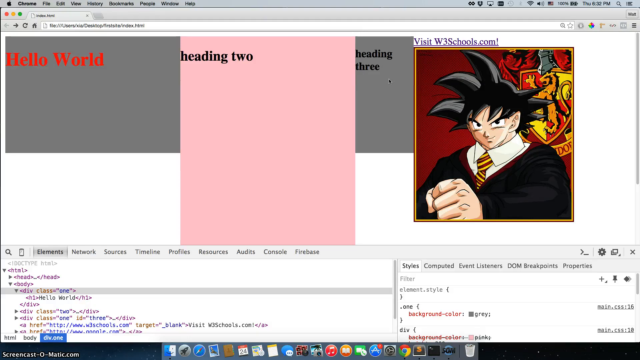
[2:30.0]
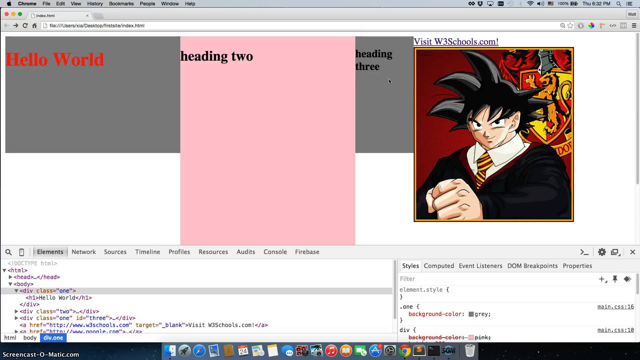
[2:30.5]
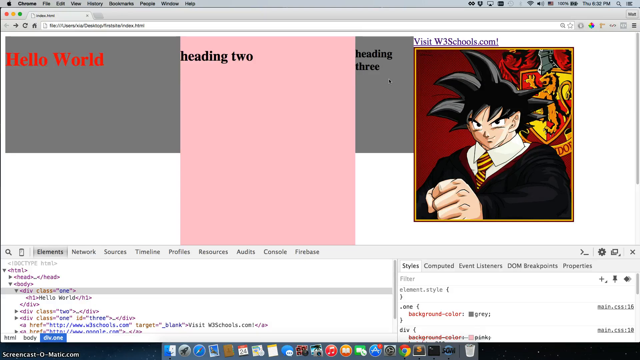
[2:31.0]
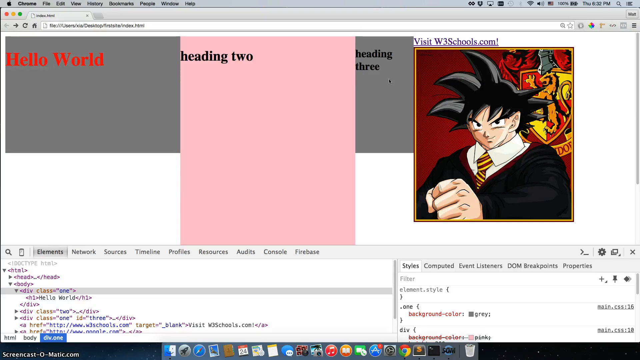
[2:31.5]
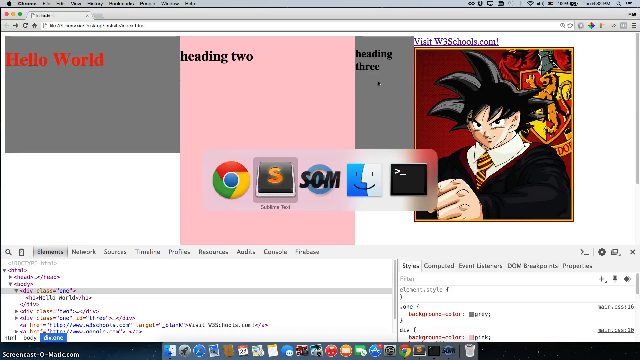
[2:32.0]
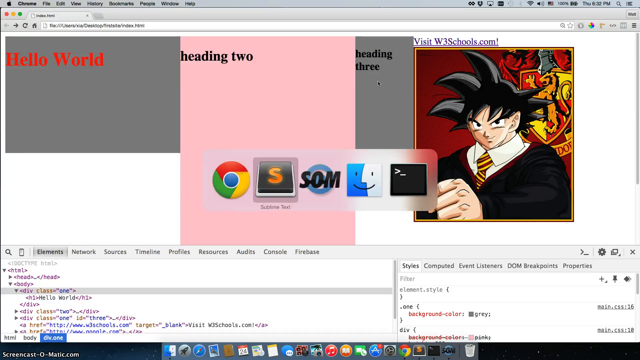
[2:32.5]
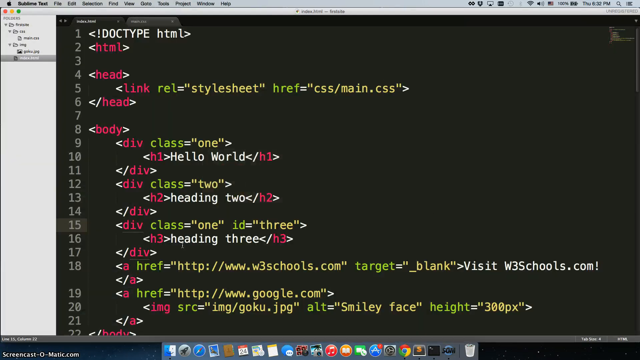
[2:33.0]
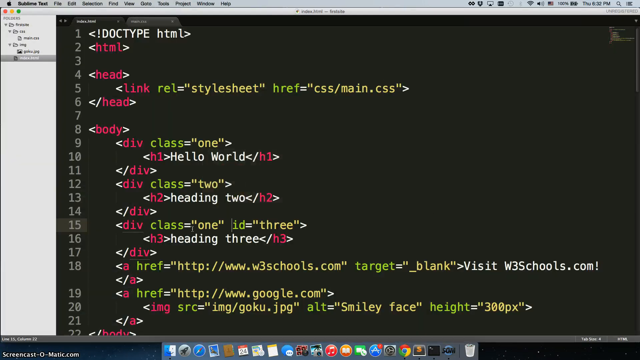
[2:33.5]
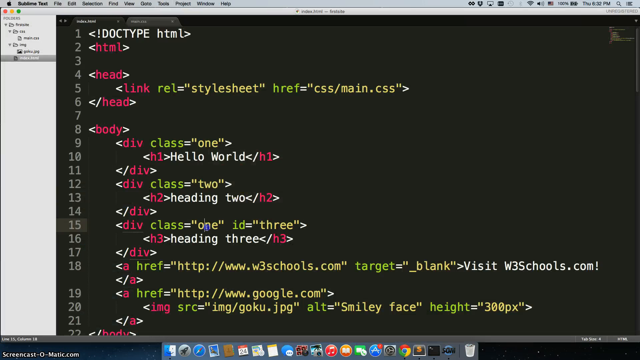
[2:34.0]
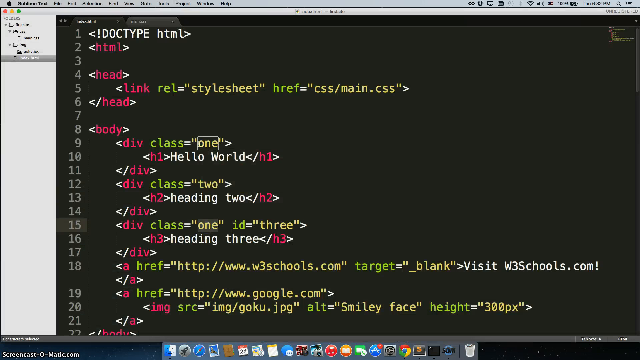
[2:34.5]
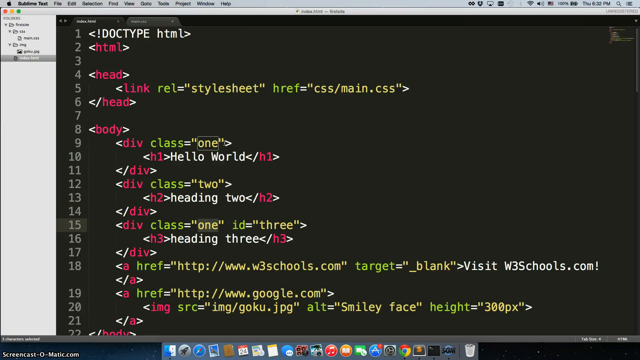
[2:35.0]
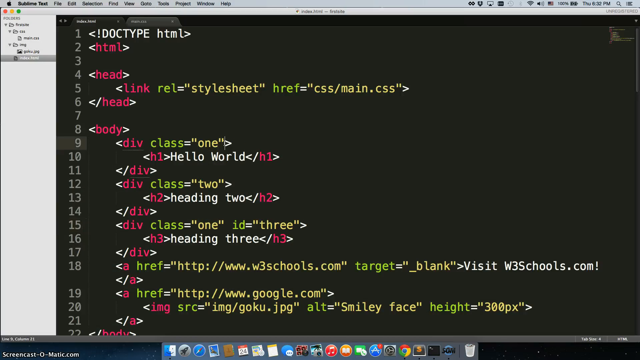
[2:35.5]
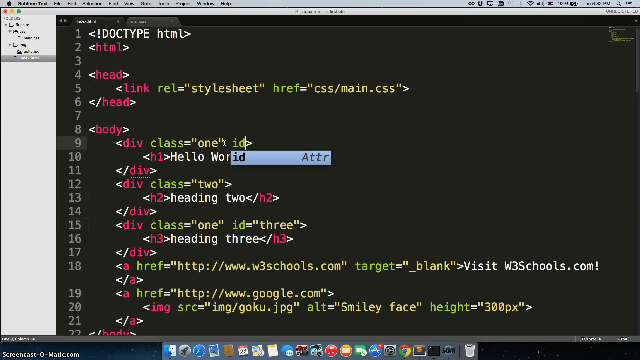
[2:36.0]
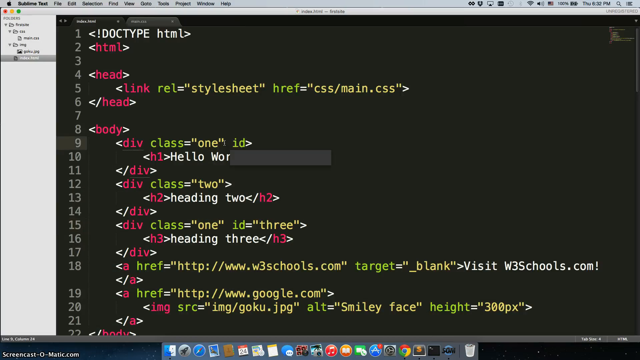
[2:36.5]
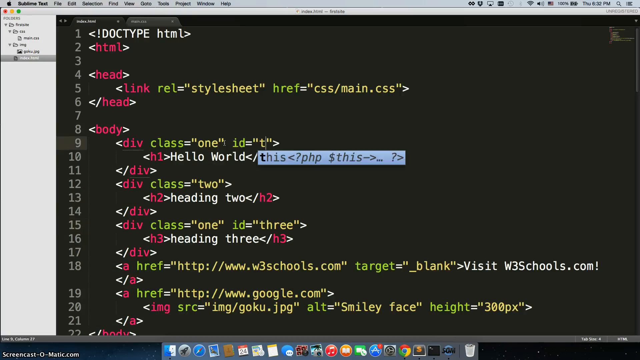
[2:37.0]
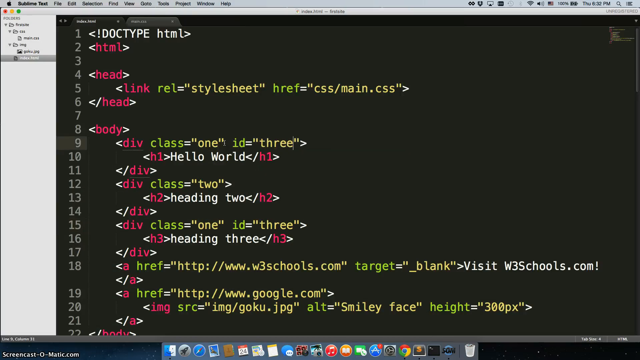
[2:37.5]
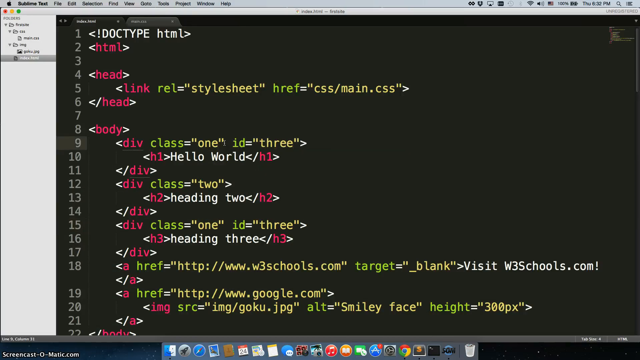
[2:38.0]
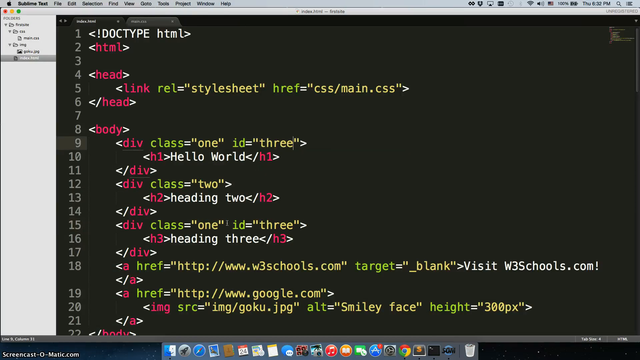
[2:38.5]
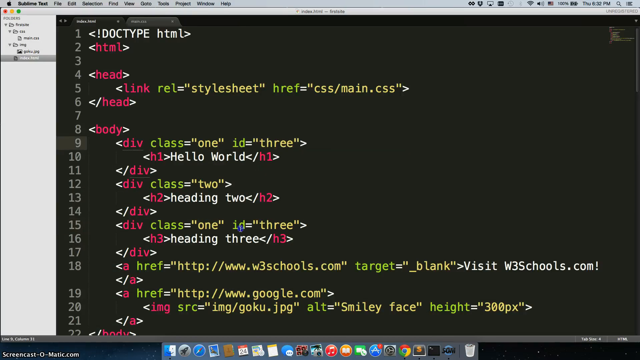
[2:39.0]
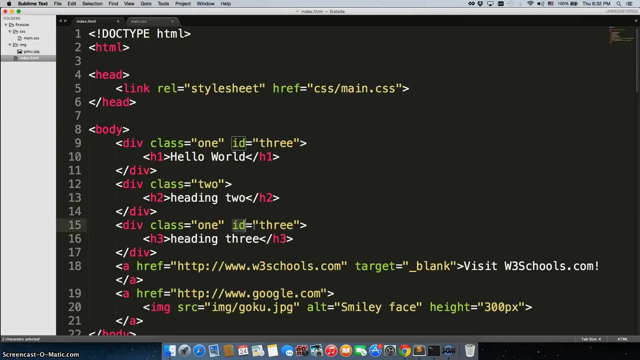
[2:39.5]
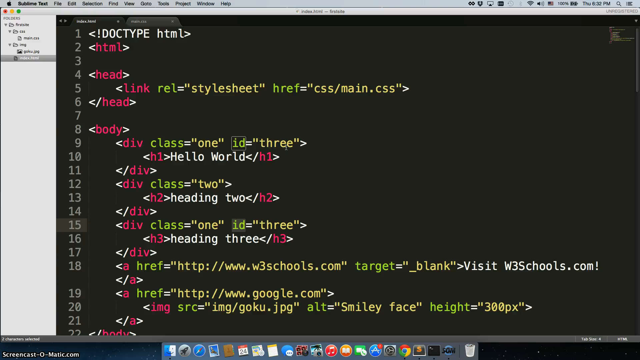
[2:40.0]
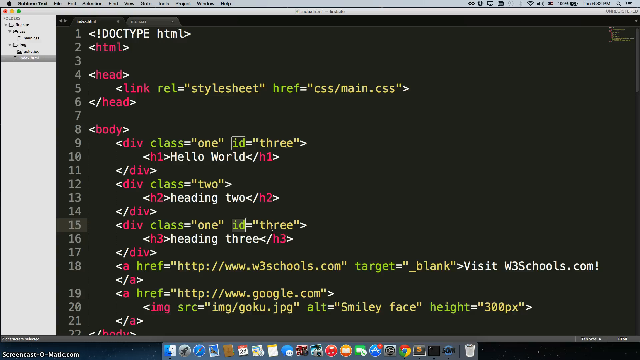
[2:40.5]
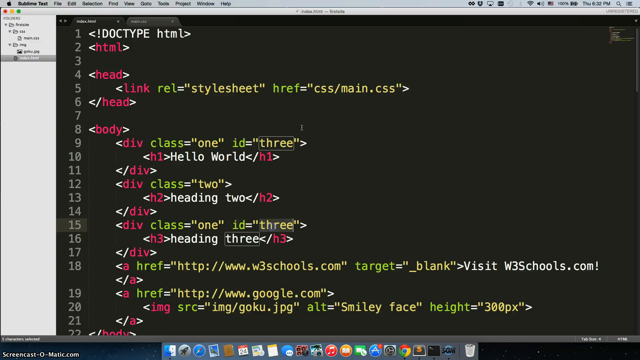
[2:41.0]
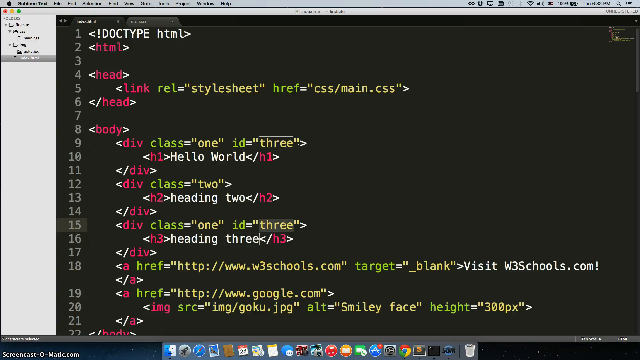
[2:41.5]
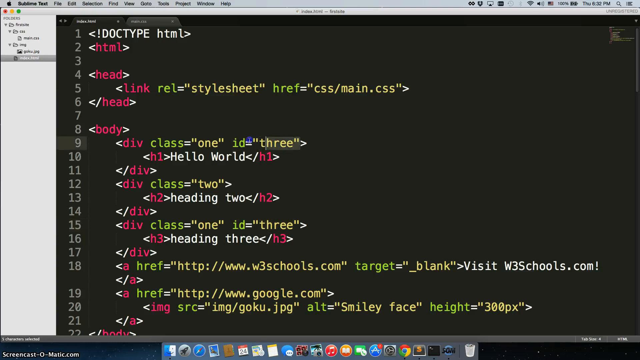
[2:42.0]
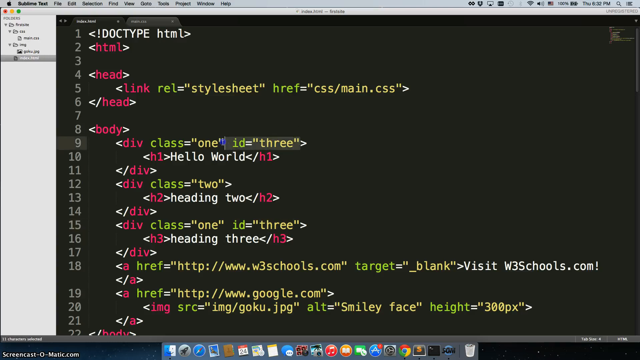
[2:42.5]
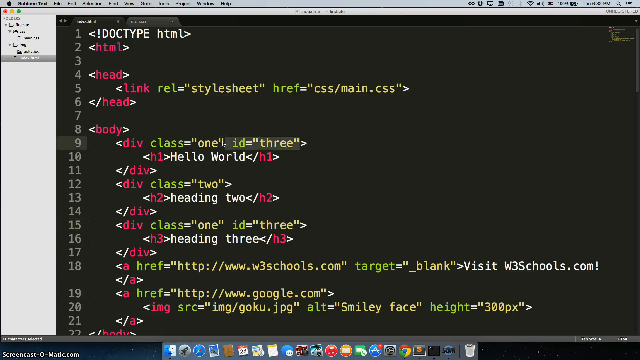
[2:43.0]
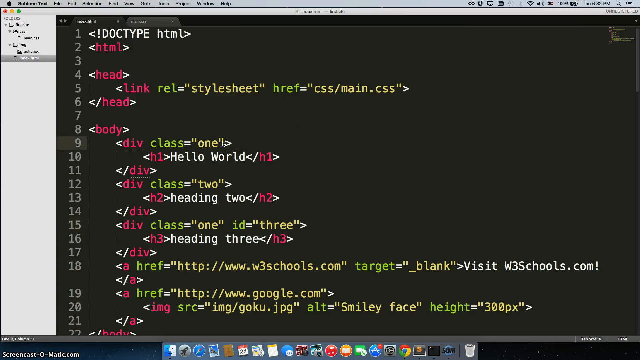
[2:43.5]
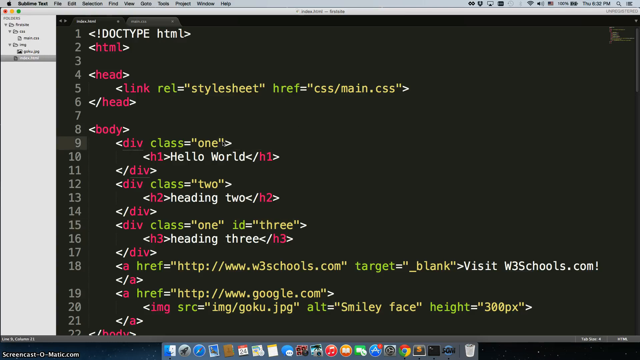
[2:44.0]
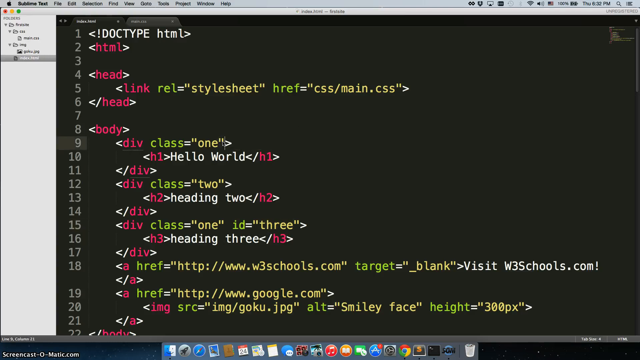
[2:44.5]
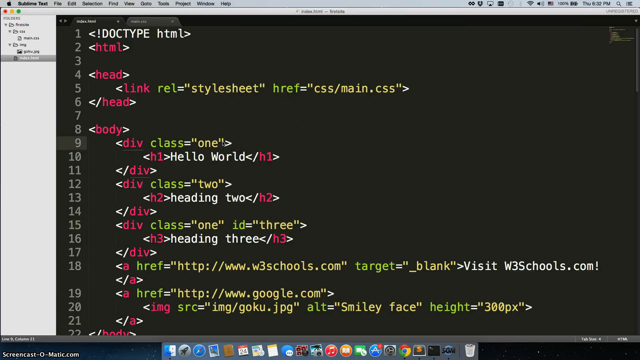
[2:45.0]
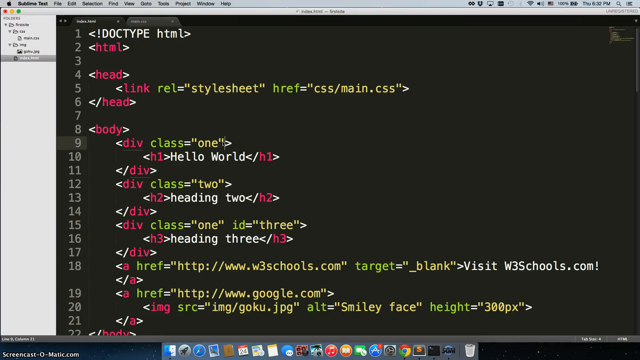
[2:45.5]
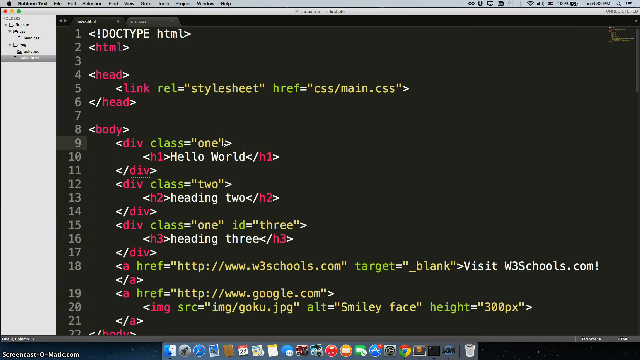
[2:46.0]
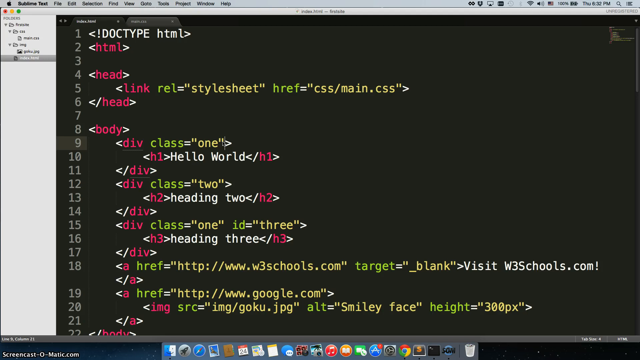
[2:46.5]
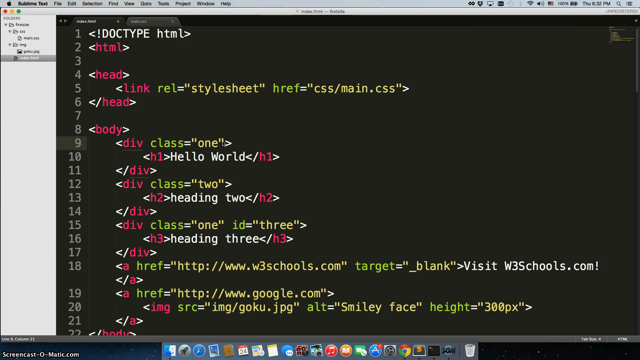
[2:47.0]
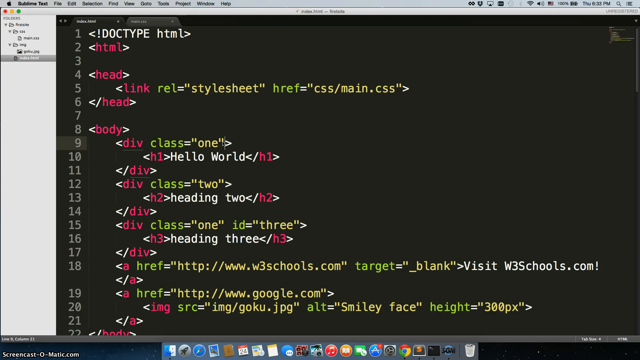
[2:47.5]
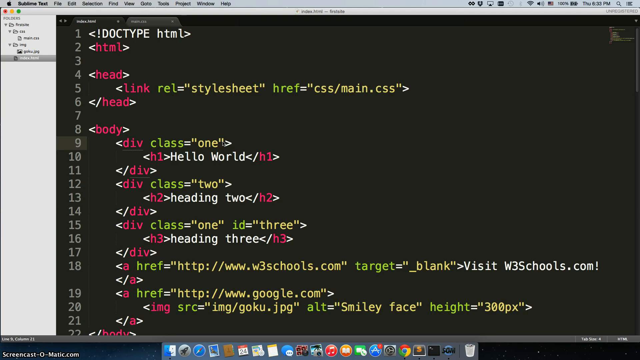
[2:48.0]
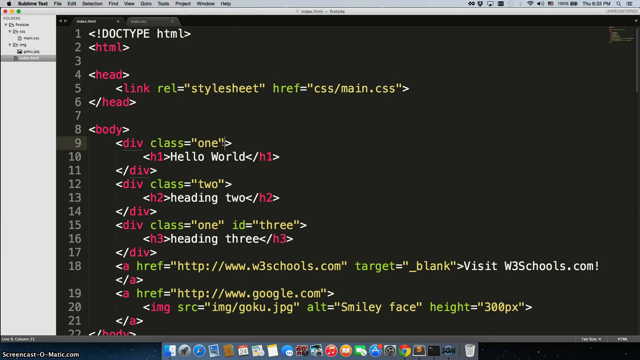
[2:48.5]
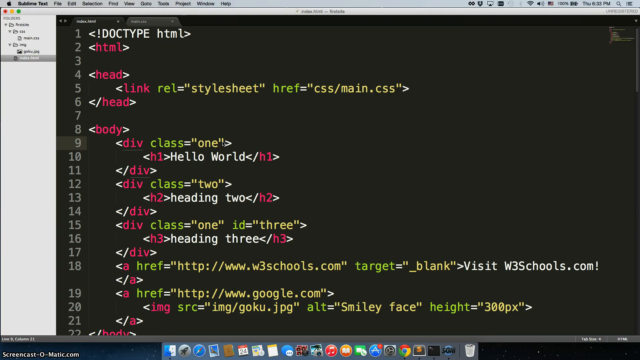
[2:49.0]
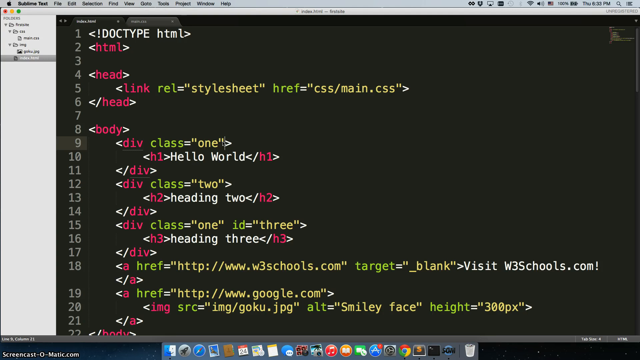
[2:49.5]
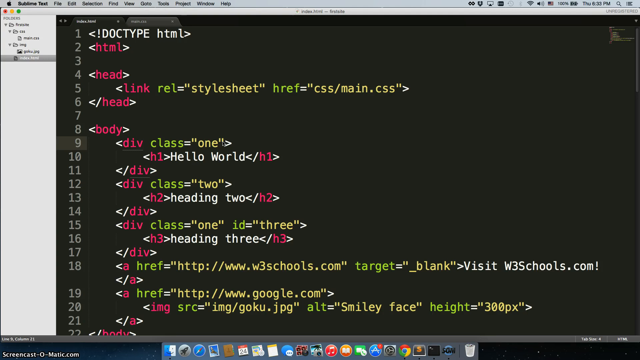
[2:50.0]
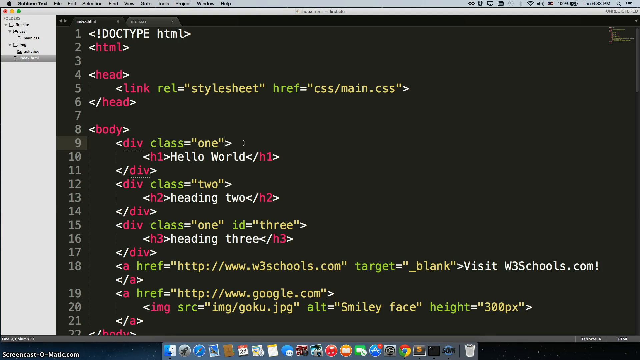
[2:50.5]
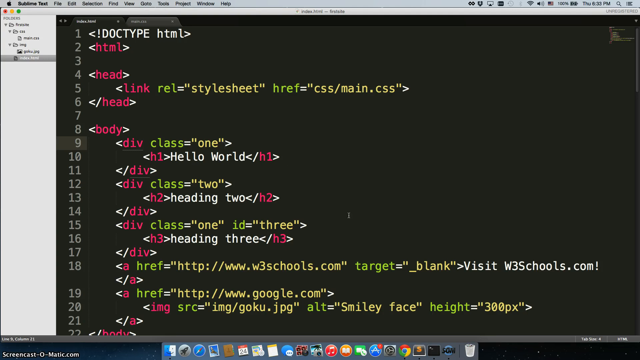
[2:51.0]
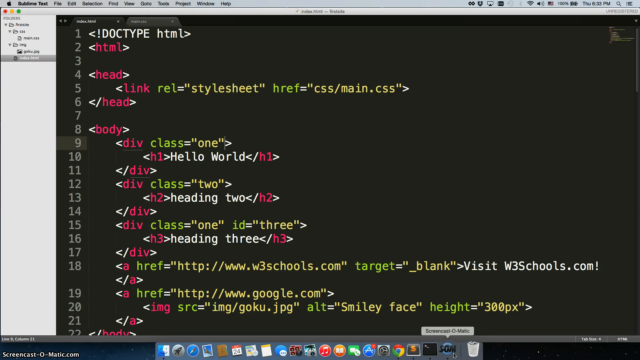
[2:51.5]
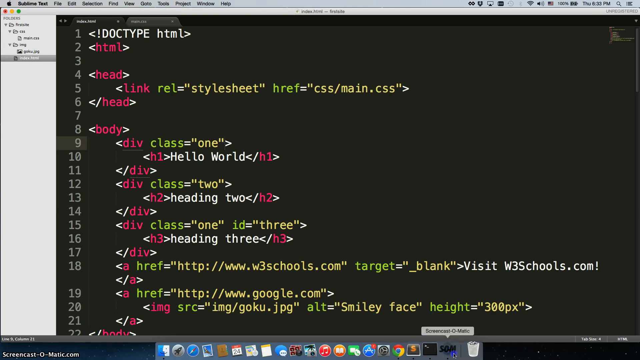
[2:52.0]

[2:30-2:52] A Google Chrome window opens and the heading 3 box turns grey, along with the Hello World box; the only box in pink is heading 2. The view switches to the coding window, where someone types on line 9, starting with 1, id equals "3" in inverted commas. It seems the text is copied, or that after copying, what was written on line 9 is removed. The cursor then blinks for a short time, seemingly as if someone is deciding what to type, before the video ends.